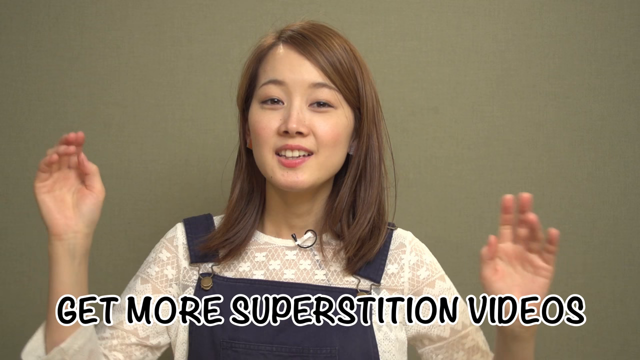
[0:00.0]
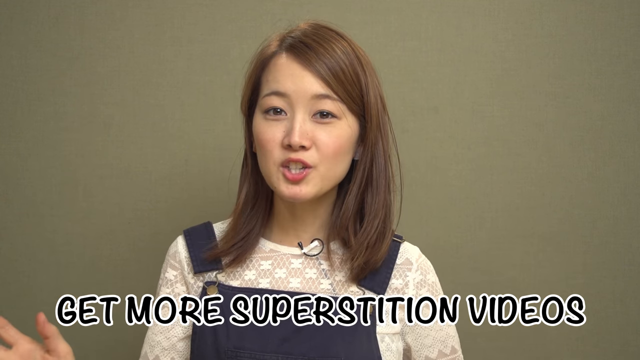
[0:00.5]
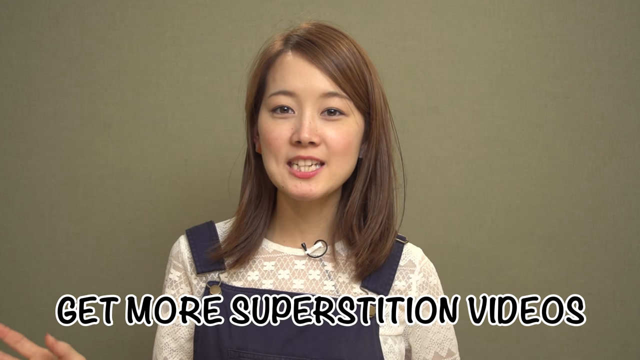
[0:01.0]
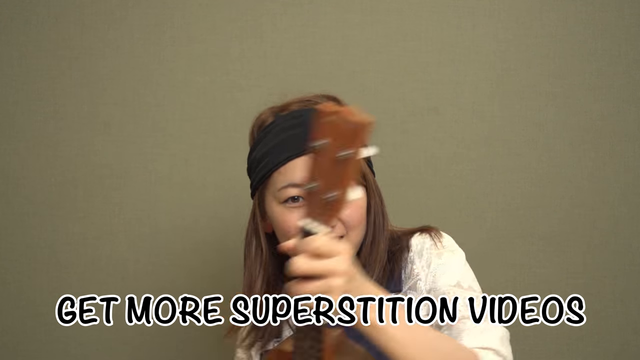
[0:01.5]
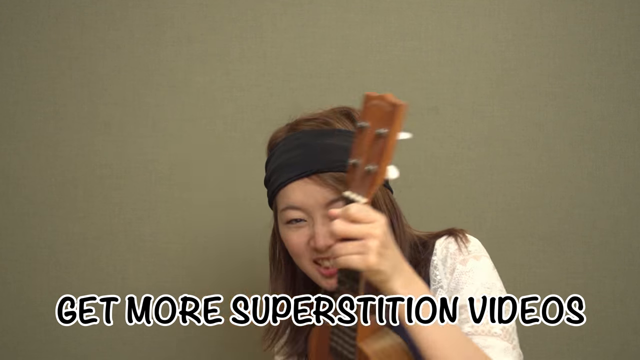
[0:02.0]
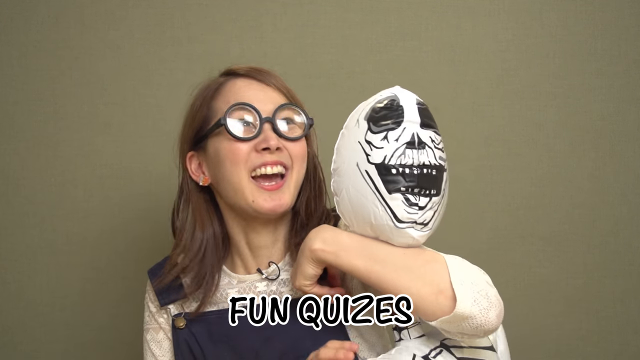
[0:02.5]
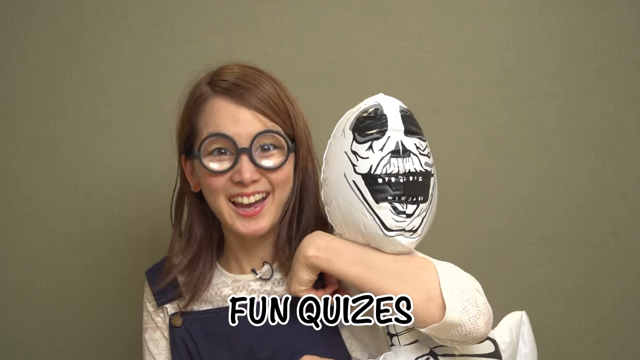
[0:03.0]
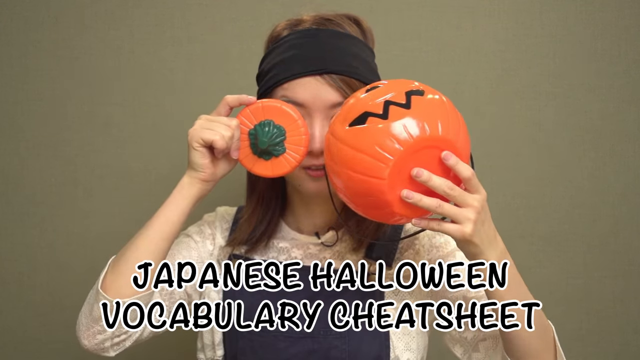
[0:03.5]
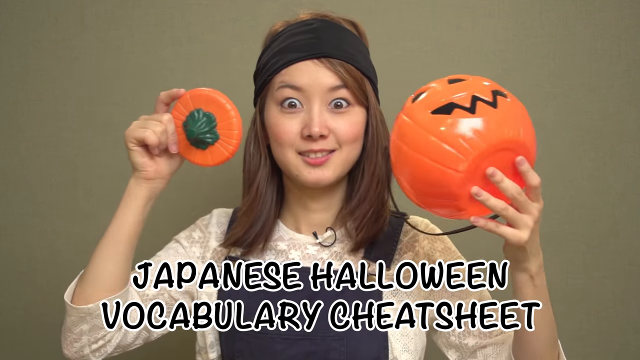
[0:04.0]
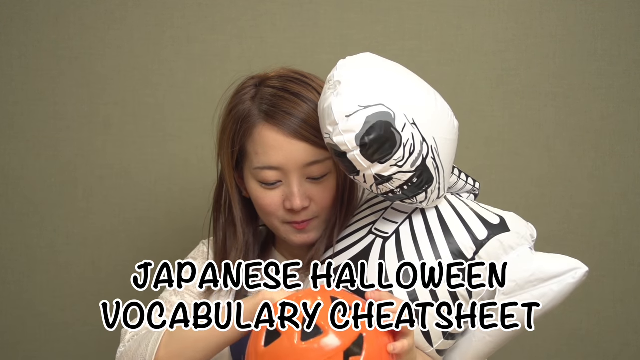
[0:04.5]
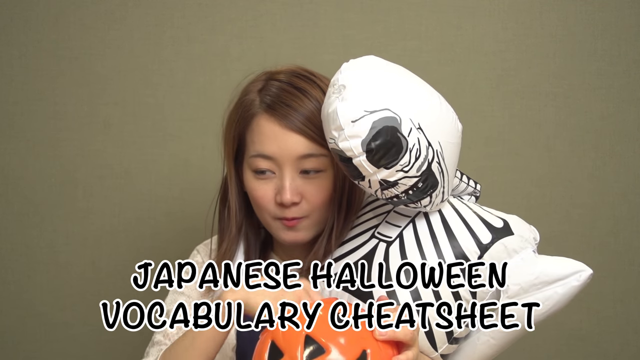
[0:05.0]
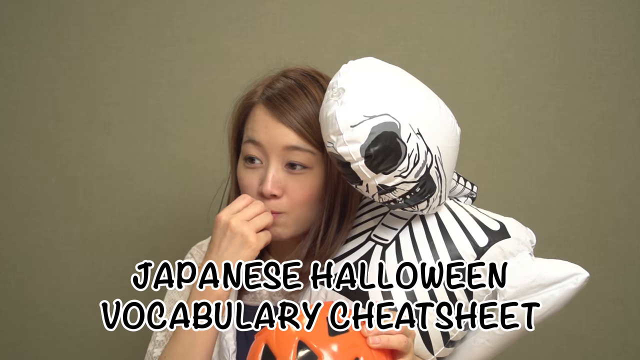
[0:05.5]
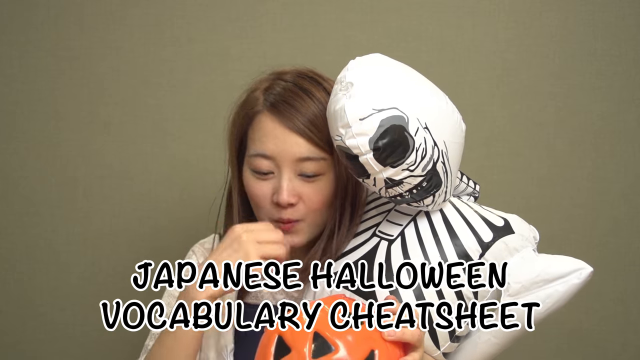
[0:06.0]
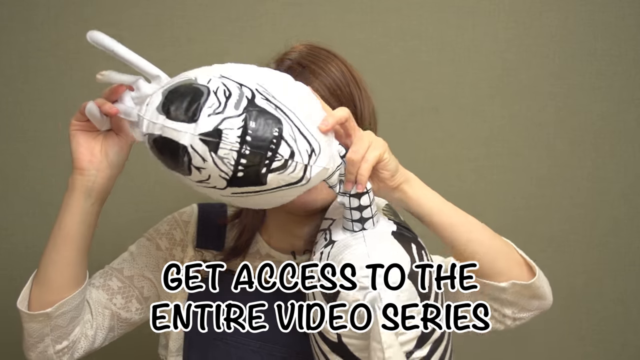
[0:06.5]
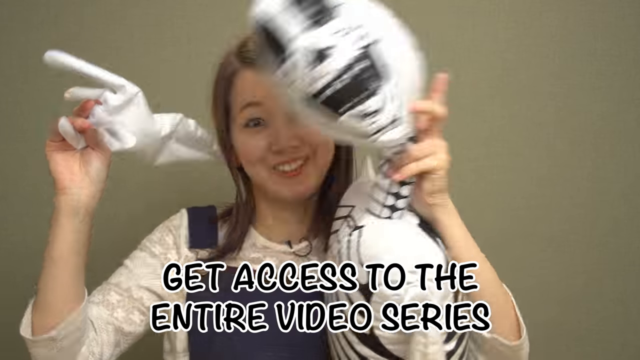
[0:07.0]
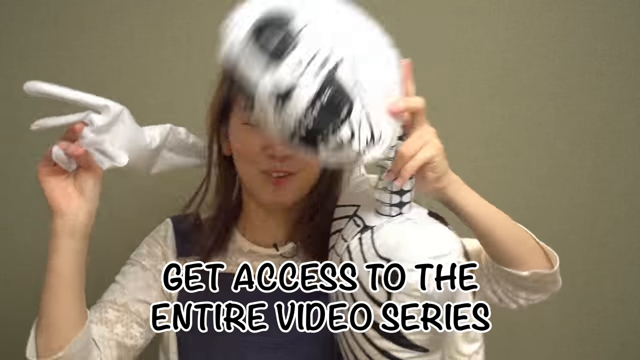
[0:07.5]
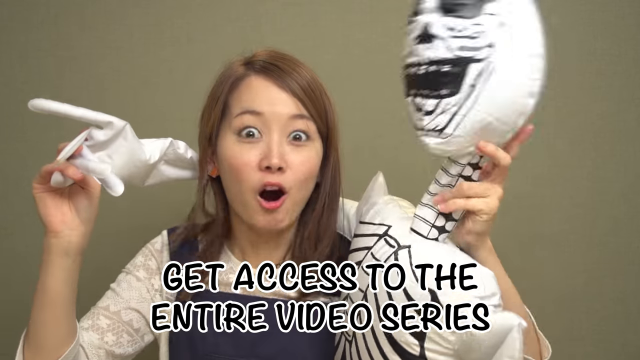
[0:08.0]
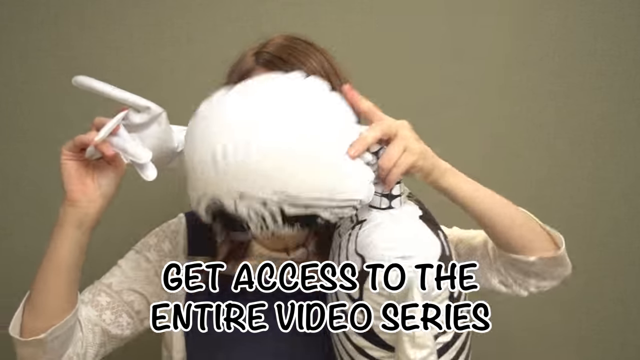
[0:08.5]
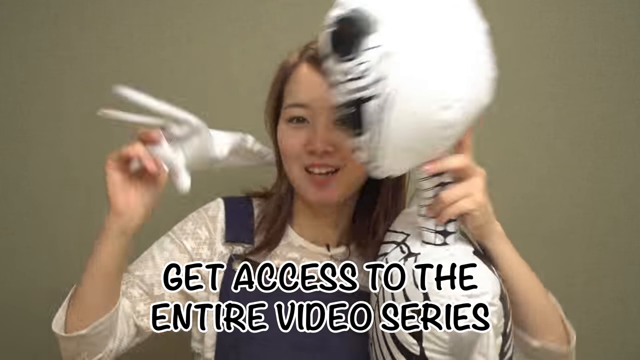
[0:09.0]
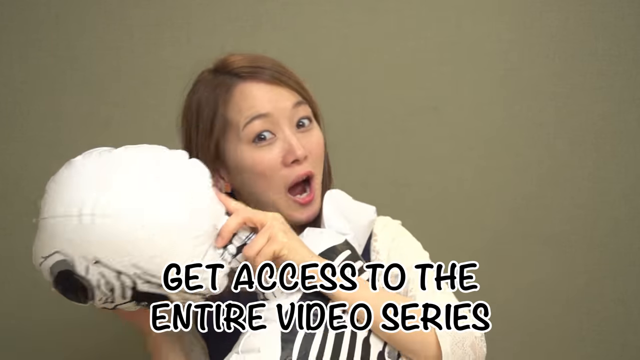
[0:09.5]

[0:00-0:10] An Asian woman with brown, medium-length hair, brown eyes and white teeth wears a white t-shirt and some garden suit. She does various odd things: she plays with a guitar, smiles, and does things with a Halloween pumpkin. Text reads "japanese halloween vocabulary cheat sheet". She also does things with a skeleton.